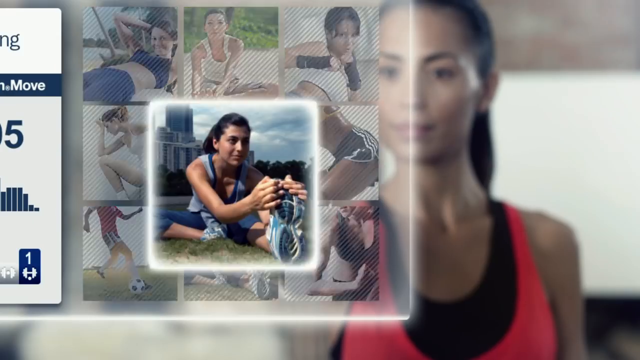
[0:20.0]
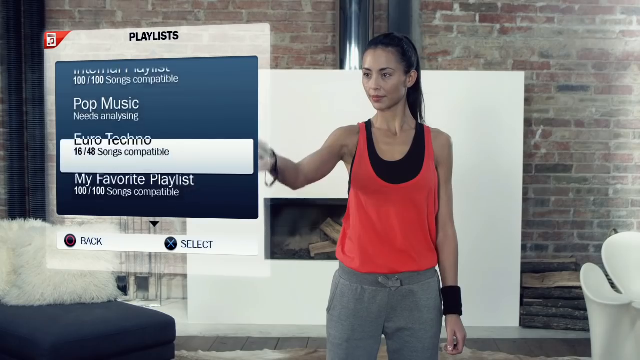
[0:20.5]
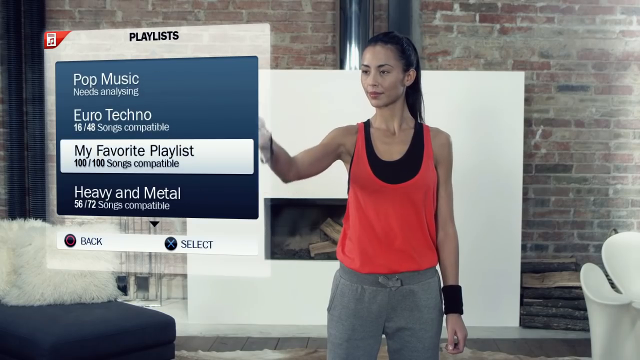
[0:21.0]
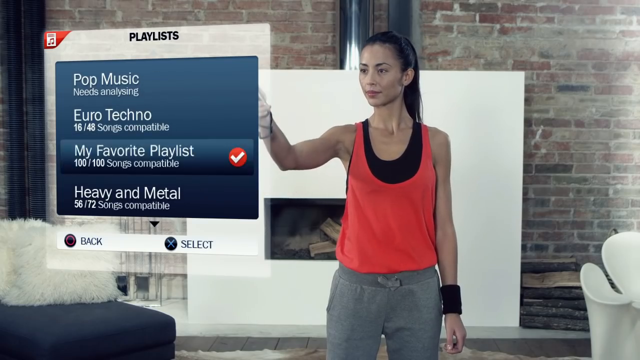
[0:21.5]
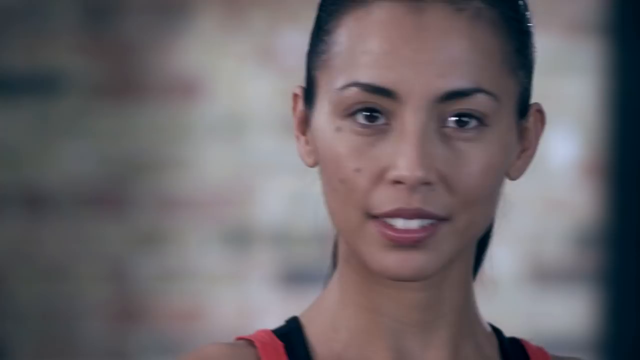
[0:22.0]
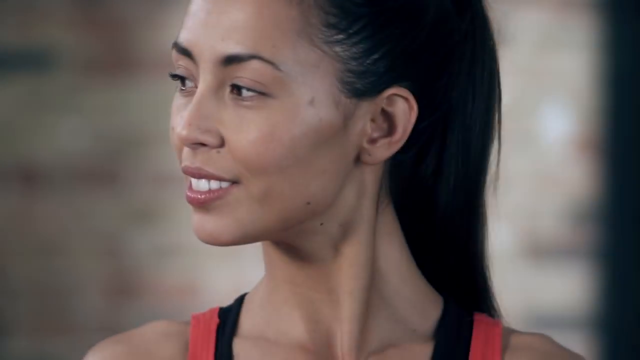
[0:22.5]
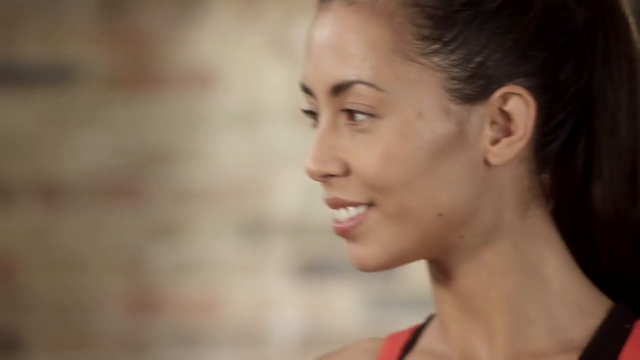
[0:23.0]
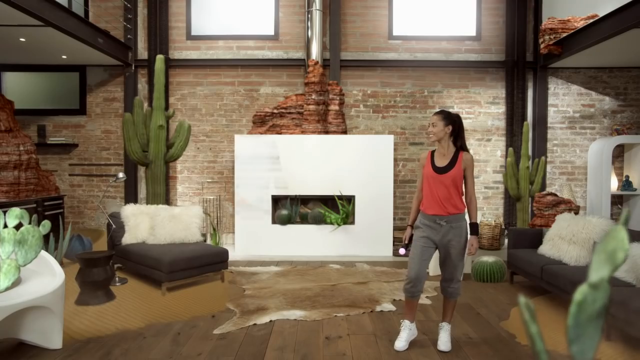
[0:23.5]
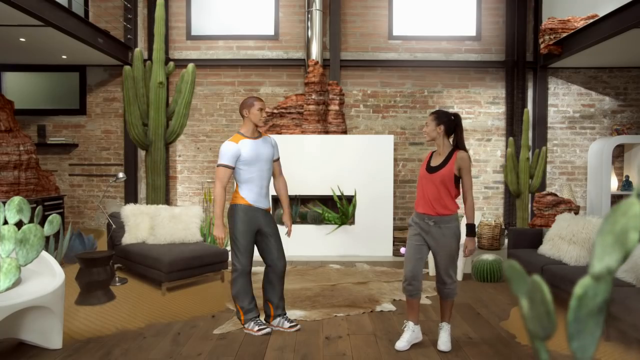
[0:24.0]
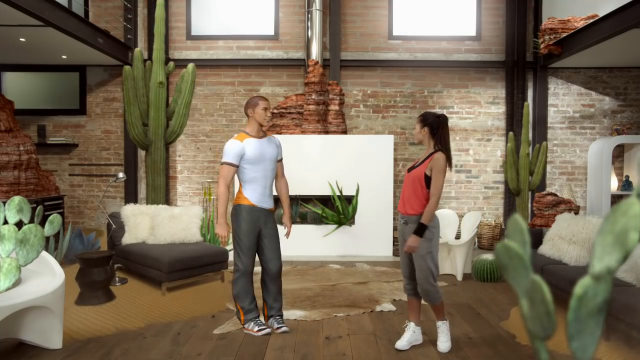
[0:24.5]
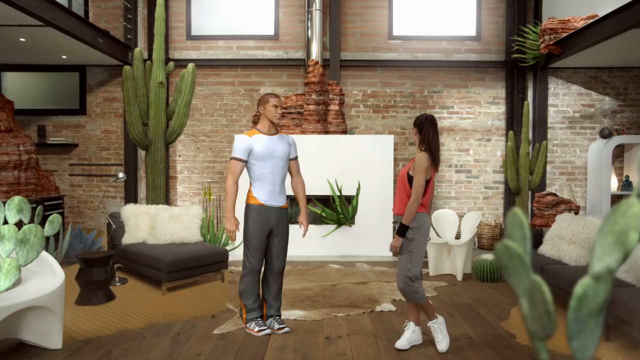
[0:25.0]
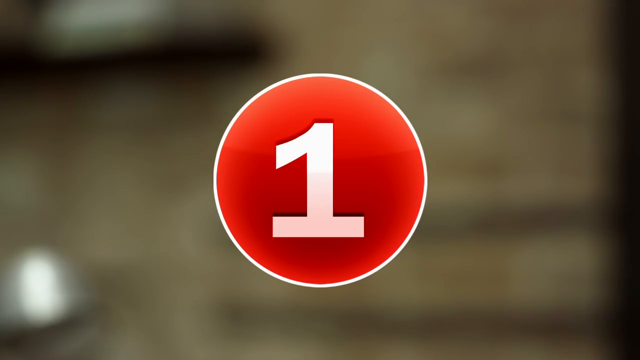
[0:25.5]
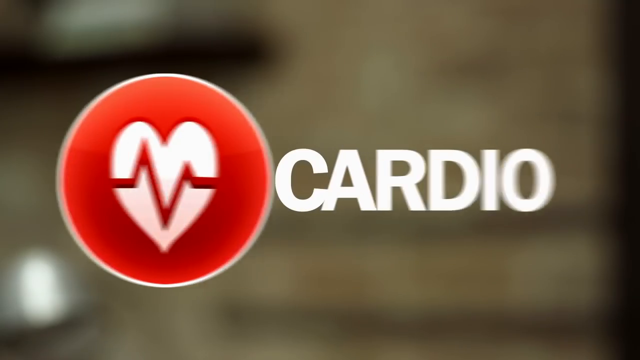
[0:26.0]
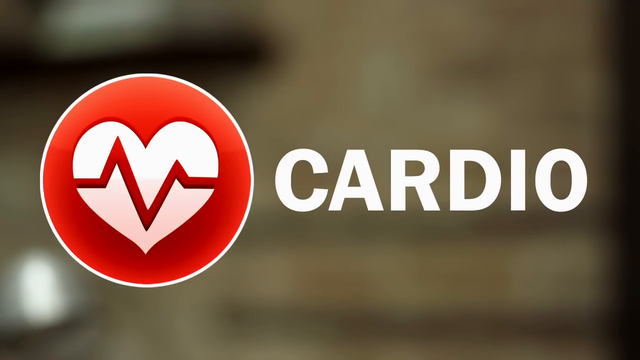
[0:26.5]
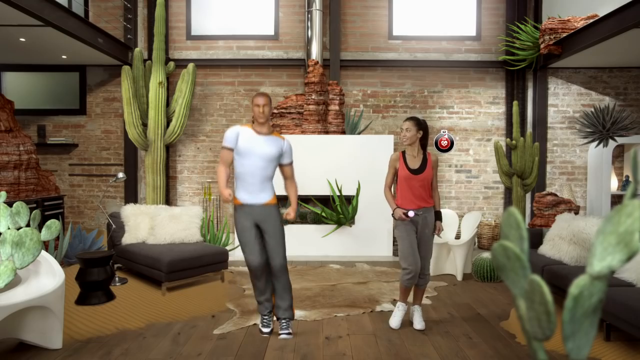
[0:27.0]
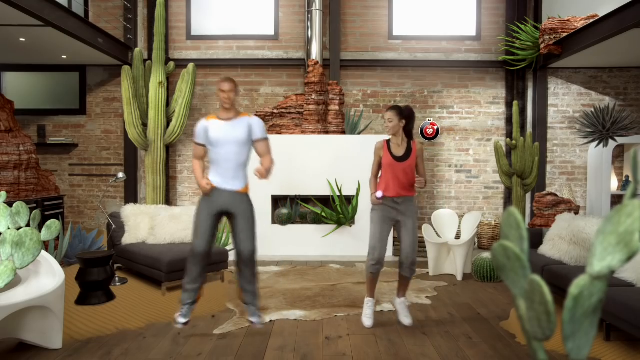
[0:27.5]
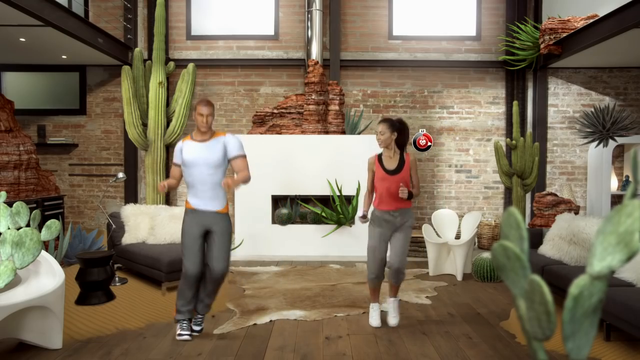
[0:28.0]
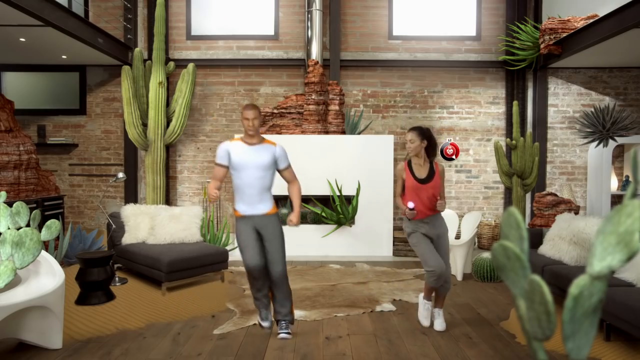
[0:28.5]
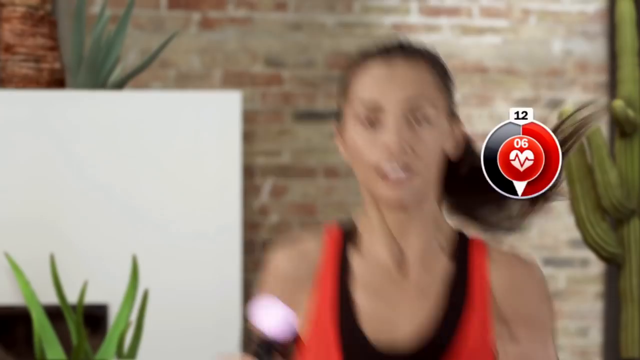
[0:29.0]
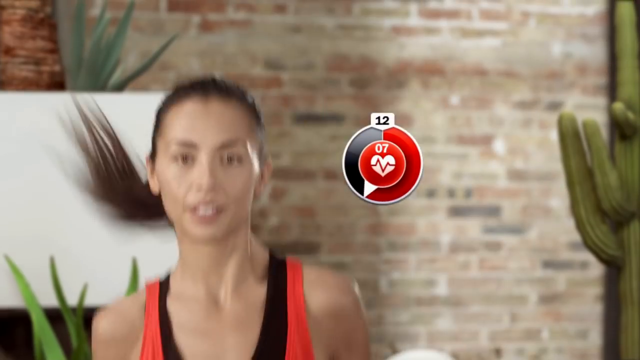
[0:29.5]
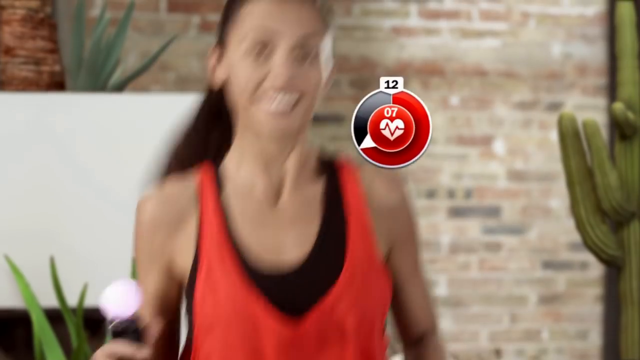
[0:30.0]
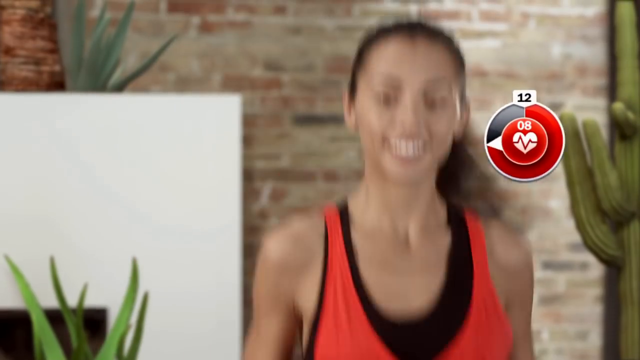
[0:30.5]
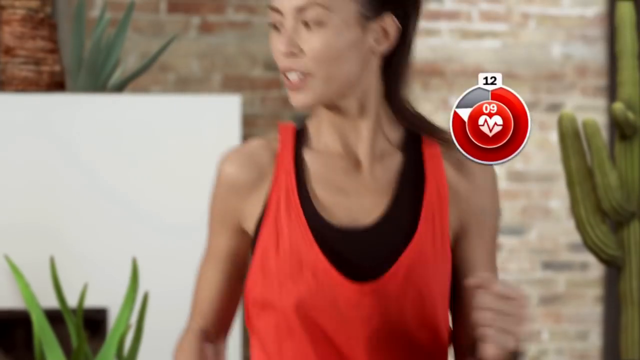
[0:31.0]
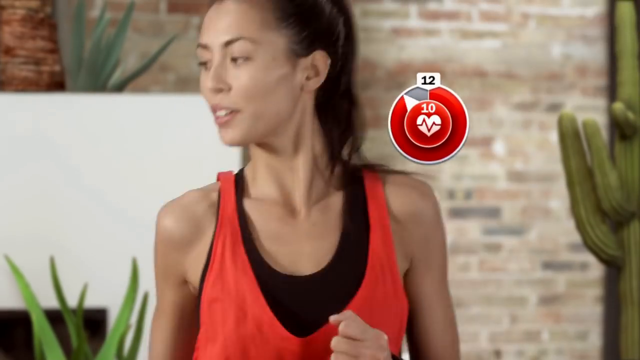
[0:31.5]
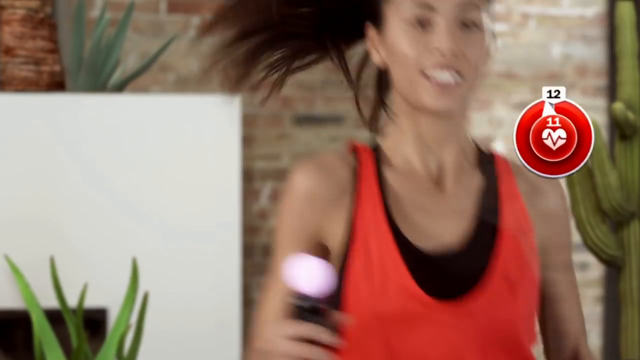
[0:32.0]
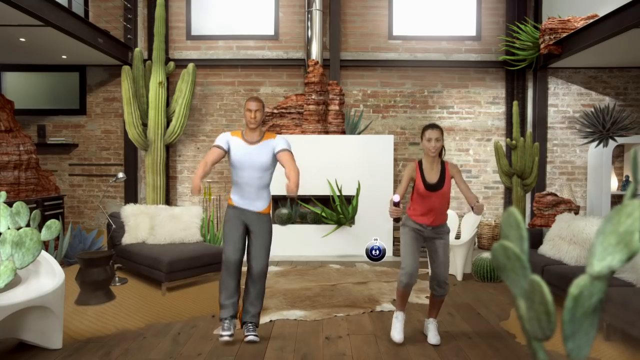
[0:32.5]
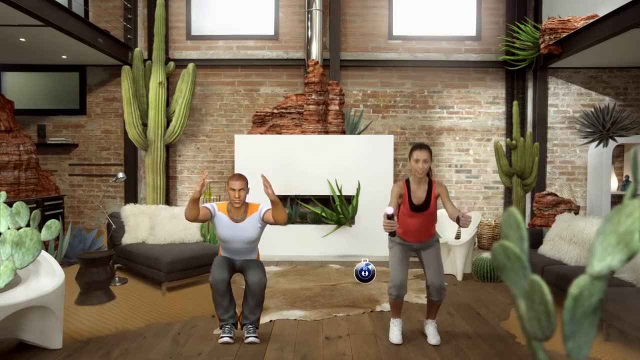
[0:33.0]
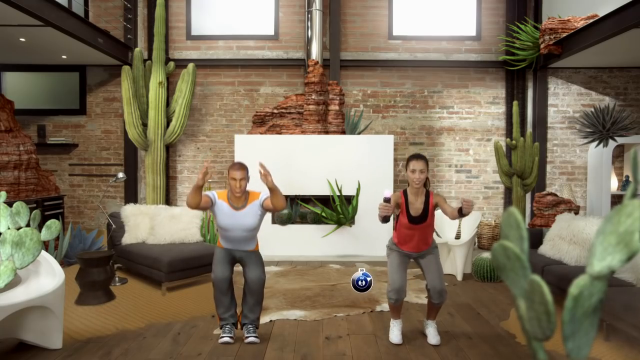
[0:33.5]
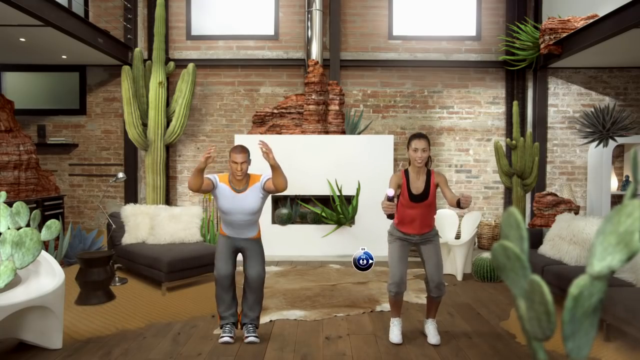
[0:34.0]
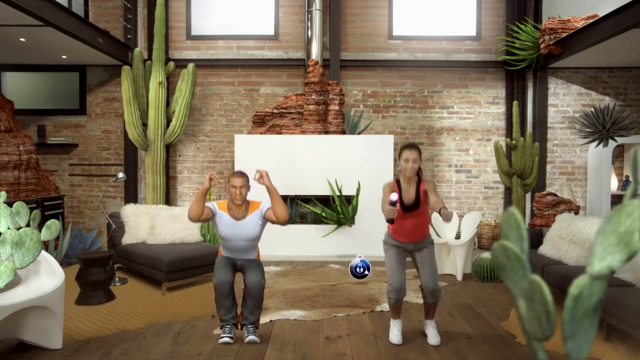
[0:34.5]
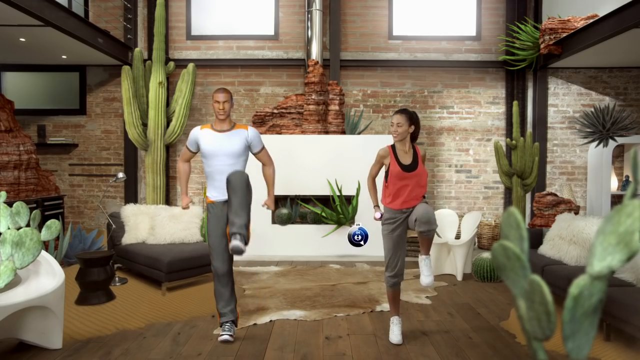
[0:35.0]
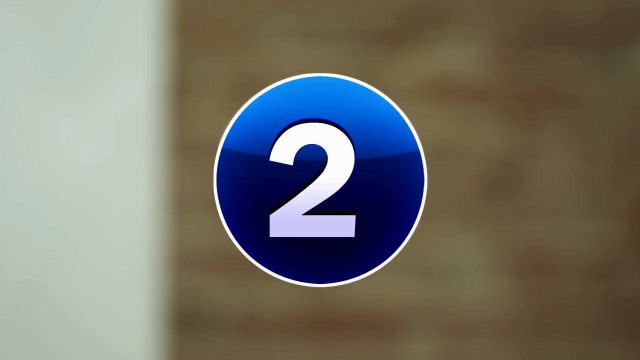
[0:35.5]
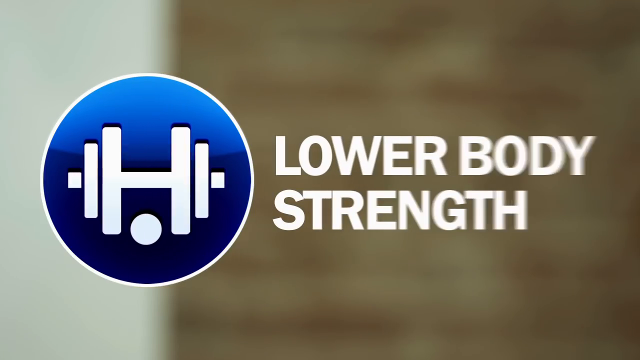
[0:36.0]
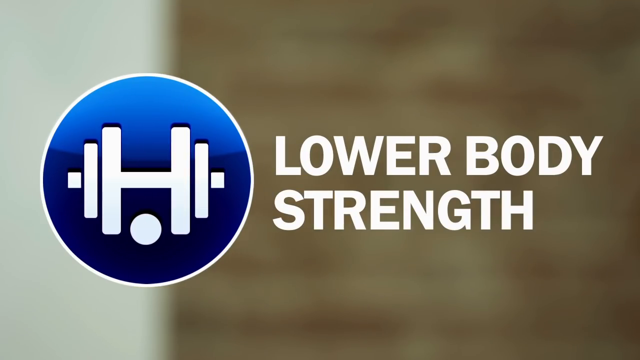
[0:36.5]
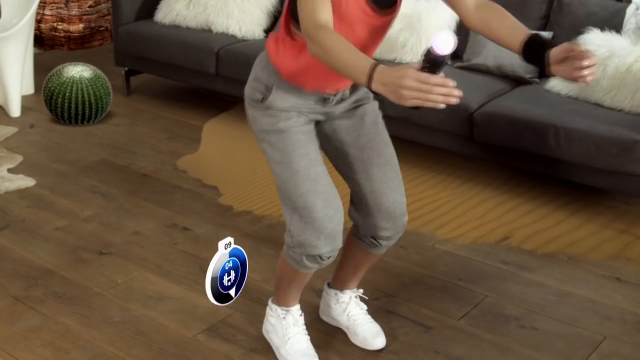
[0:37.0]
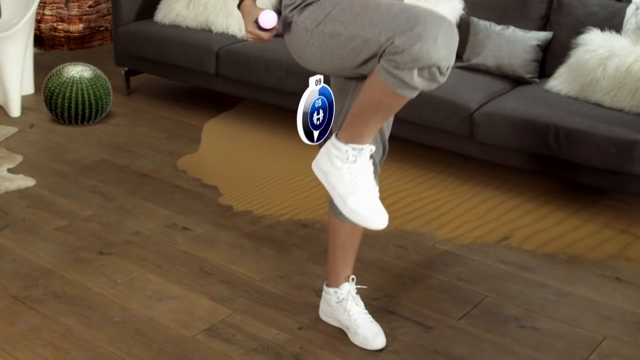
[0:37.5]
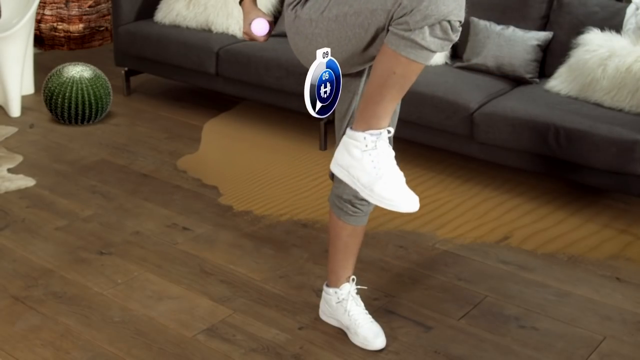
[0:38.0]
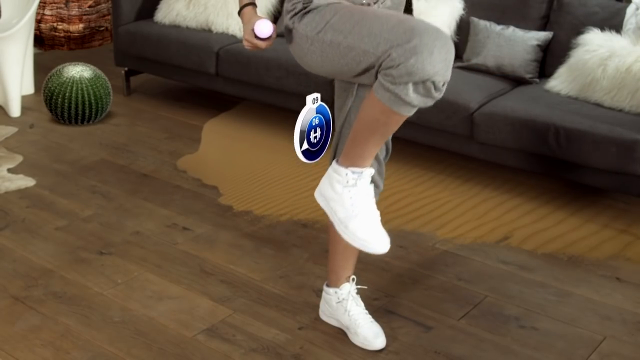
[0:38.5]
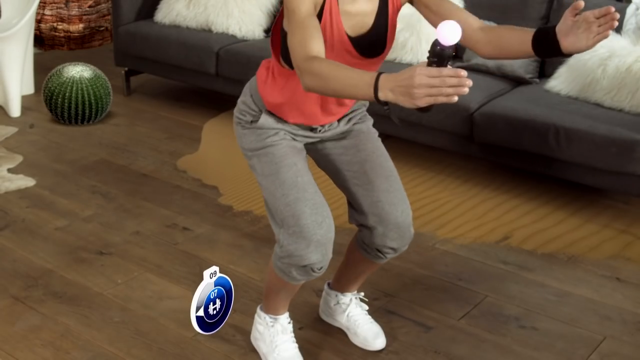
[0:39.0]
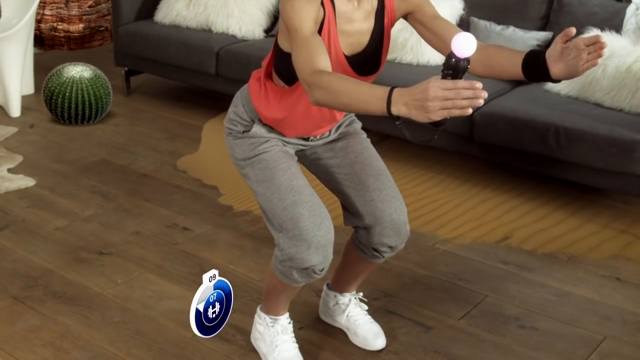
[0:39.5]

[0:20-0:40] An overlay box with an image of a woman stretching pops up on the screen. A woman in exercise clothing, who looks like she is standing in her living room, scrolls through a virtual window floating in front of her, labeled "playlists" at the top. She selects "My Favorite Playlist", and a bunch of cactus pop up in her living room, along with a virtual man in a white short-sleeved shirt and gray pants who pops up next to her. The woman sort of looks around at her house. A transition screen shows a red circle with a white number one, the word "cardio" comes on the screen, and the red circle turns into a design with a white heart inside that has EKG lines going through it. The woman and the digital man are in her living room, sort of jumping, hopping on each foot from left to right. In a close-up of the woman, a circle graphic next to her face has the heart with the EKG in the middle and a sort of meter that is increasing; the heart is black at first and turns red as the meter goes around. The man and the woman do squats, pumping down twice and then coming up to do a high knee kick. A transition screen shows a blue circle with a white number two and the words "lower body strength", and the blue circle turns into a graphic of a dumbbell. In the living room, a close-up shows the woman doing high knee kicks, bending her knee and bringing it up to waist level; near her leg is a blue circle icon with a meter that starts off black and fills up with blue as it goes around. She does a high kick and then drops into a squat with her hands held out in front of her, one hand holding a controller with a long black handle and a white ball on top.